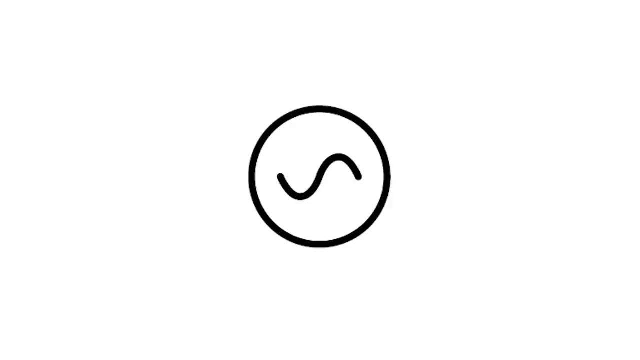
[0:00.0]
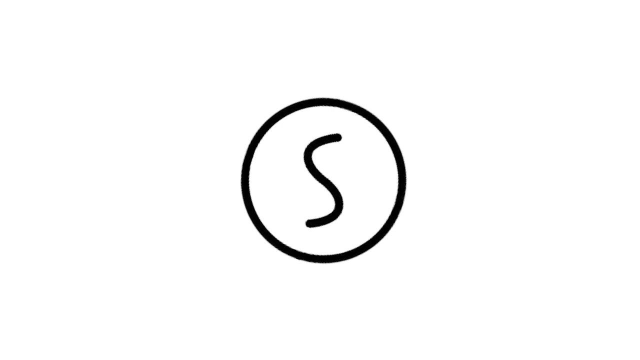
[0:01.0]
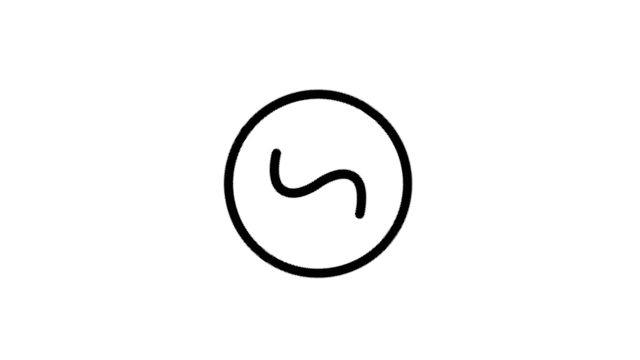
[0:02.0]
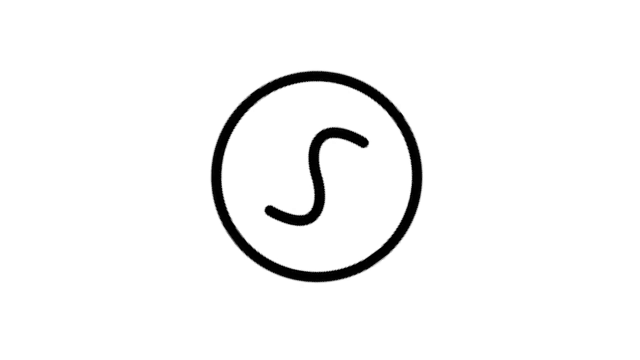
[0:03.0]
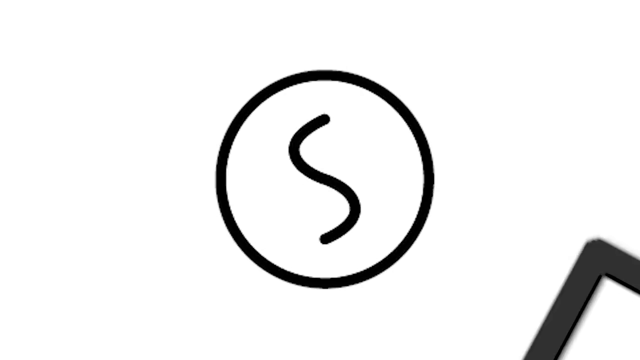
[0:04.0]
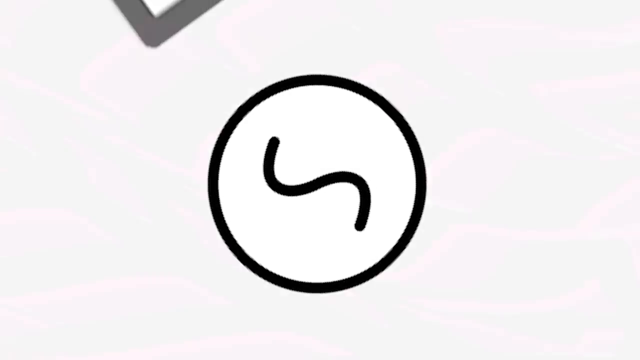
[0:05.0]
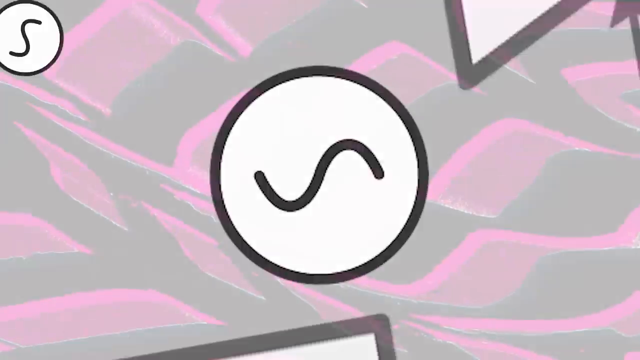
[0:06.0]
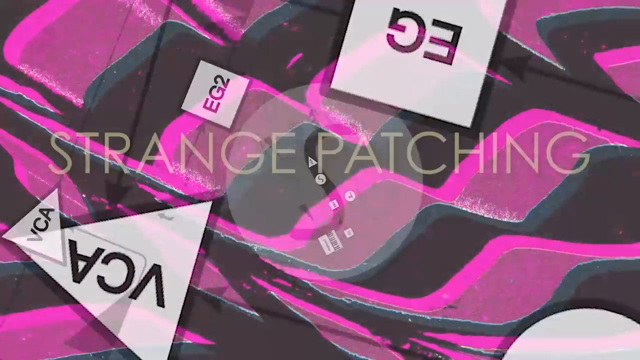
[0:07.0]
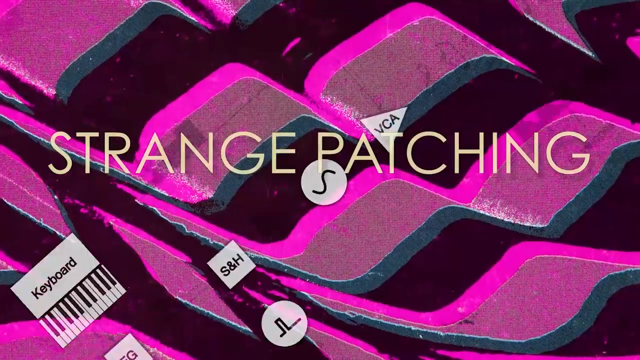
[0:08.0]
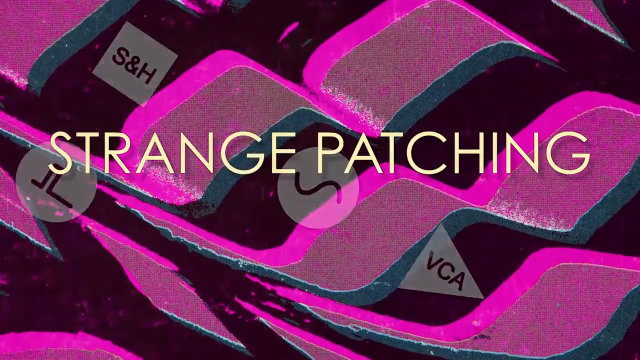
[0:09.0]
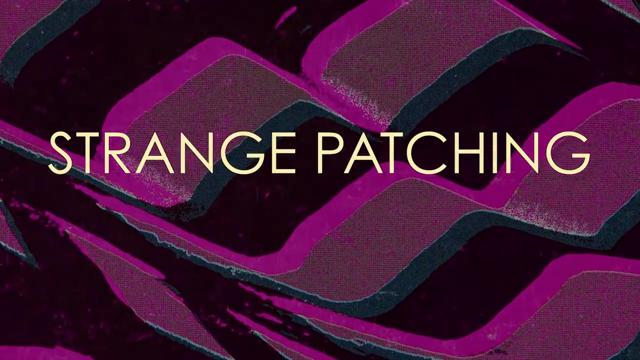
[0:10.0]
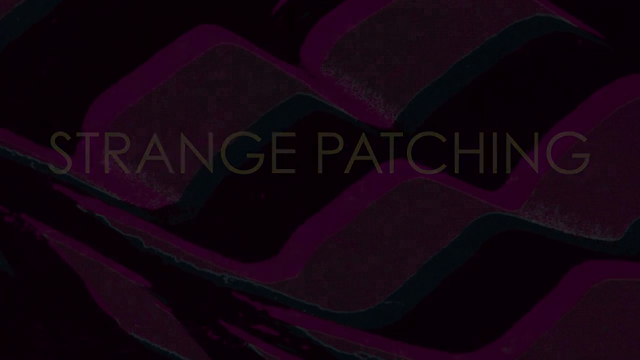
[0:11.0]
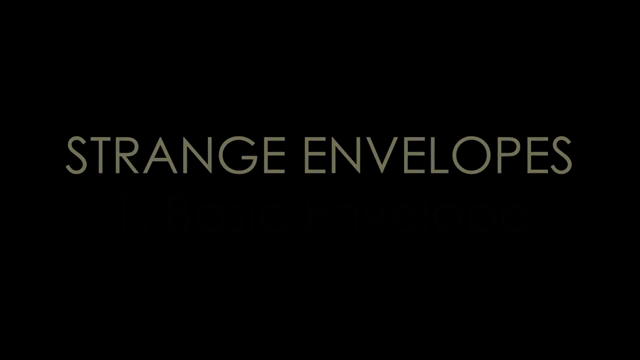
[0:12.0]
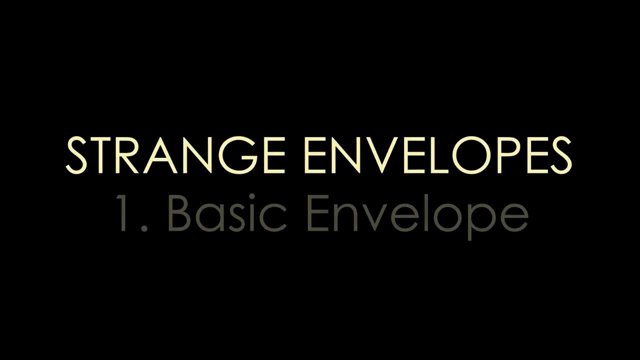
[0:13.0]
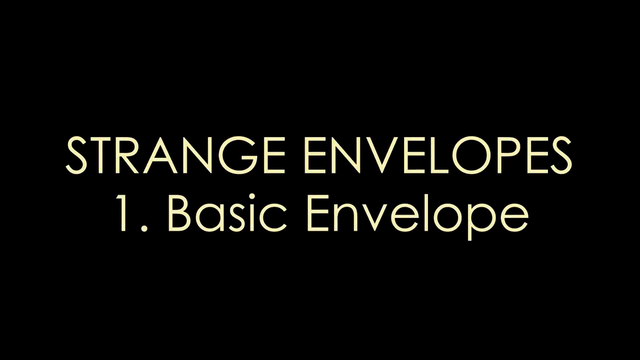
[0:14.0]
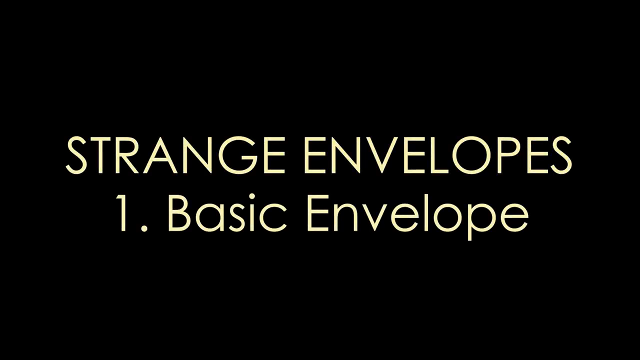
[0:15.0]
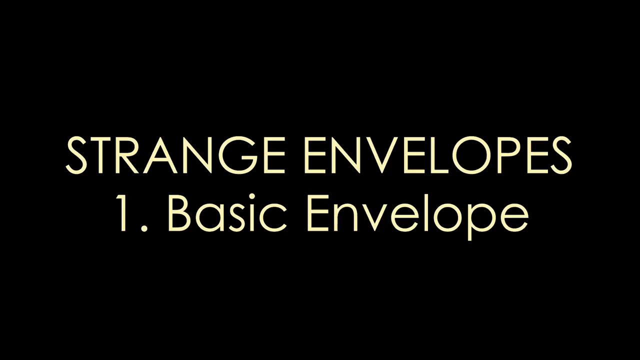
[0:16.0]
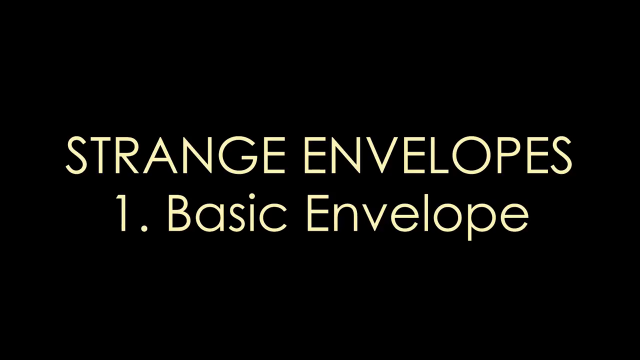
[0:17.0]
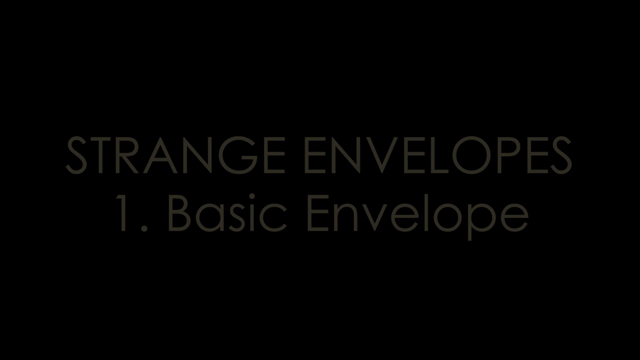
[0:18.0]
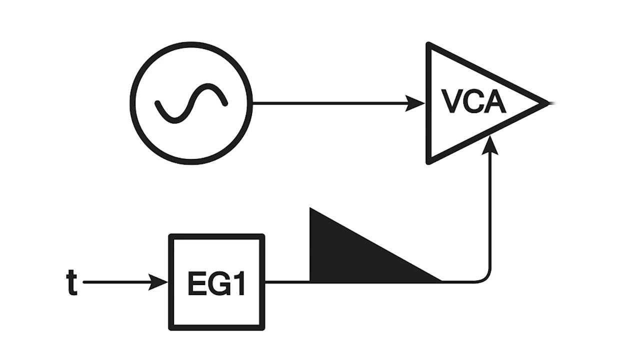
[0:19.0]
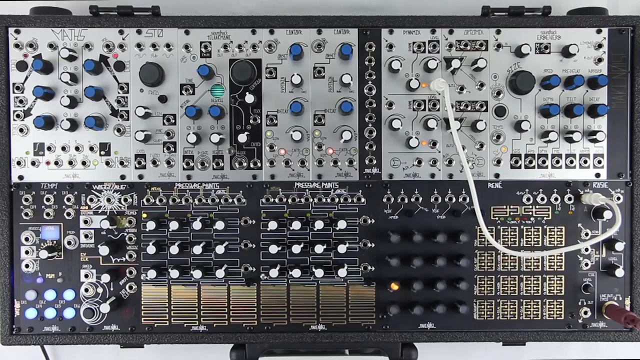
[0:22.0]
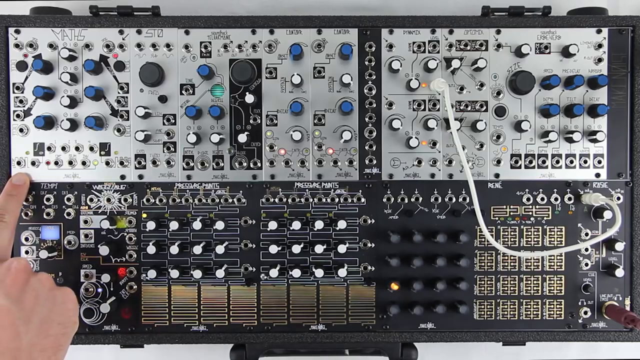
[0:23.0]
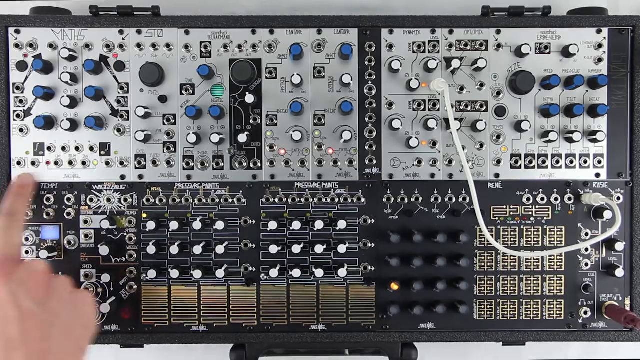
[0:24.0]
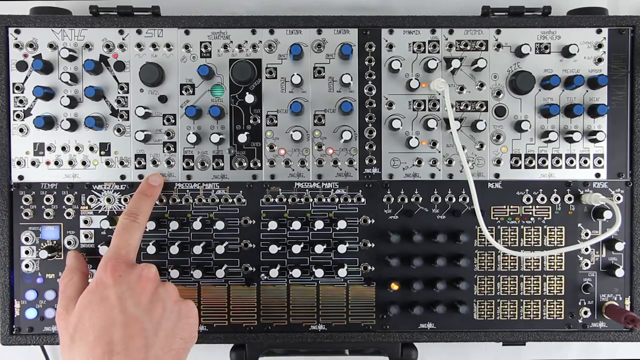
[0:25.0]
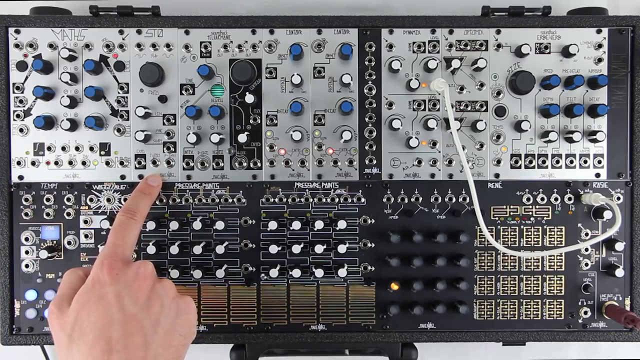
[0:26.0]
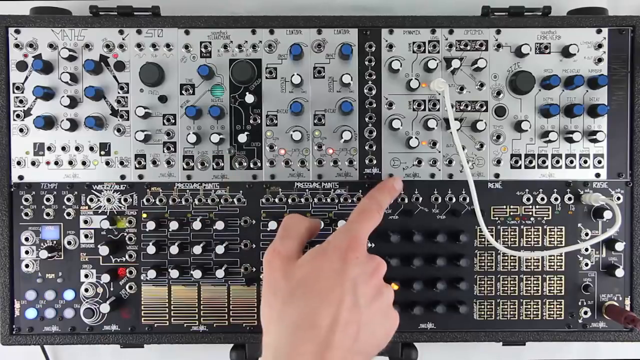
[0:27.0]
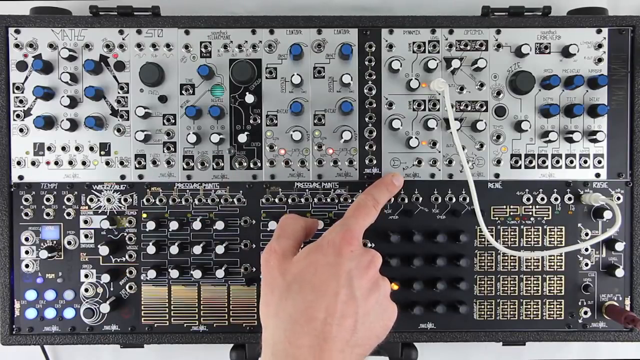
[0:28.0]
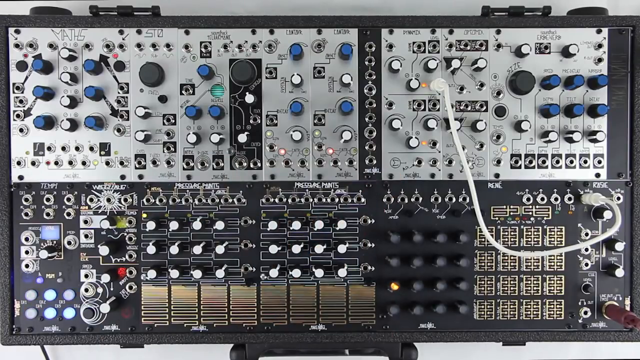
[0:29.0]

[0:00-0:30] The bottom half of a white screen transitions into a dark black. A circle logo with a sideways S appears in the center of the screen, the circle rotating as the S goes round and round. Graphics of a triangle and a square with black writing in them follow. The background changes to black and purple hot pink, then the screen goes black, and the words "strange envelopes" and "number one, basic envelopes" appear. A graphic of a circuit board is shown, followed by video of a human hand on top of a real circuit board, pointing to it.